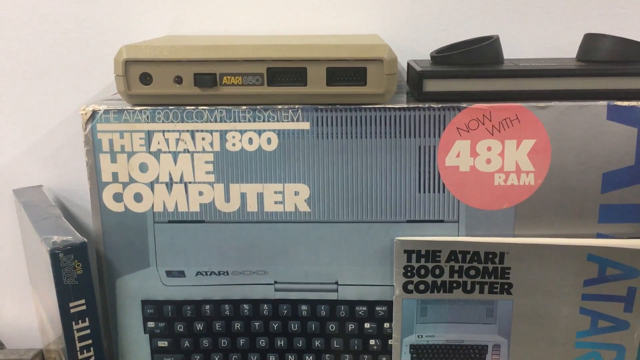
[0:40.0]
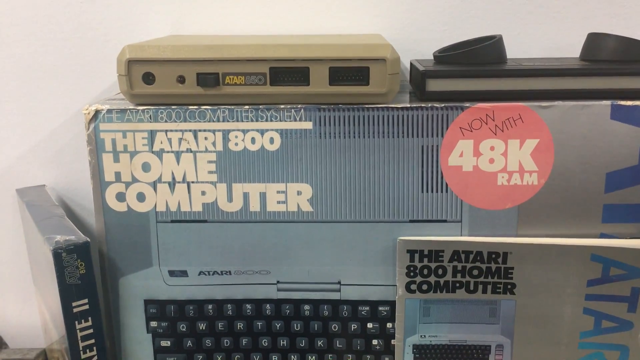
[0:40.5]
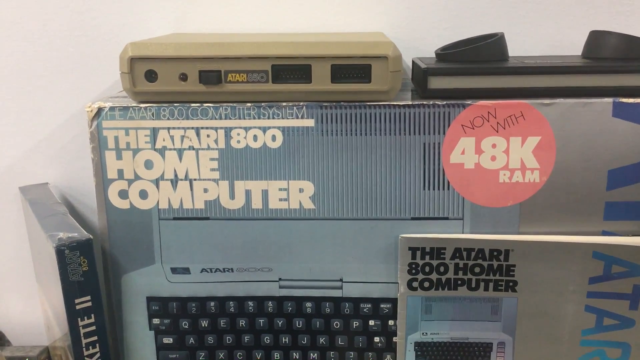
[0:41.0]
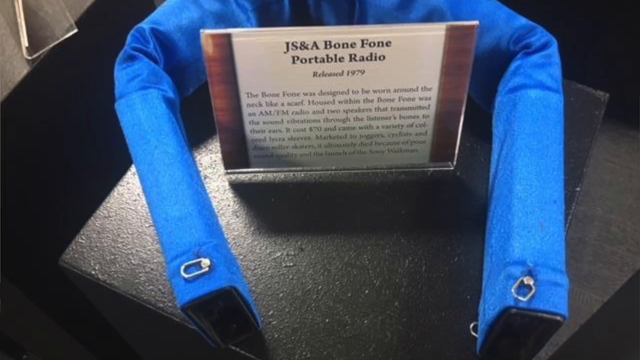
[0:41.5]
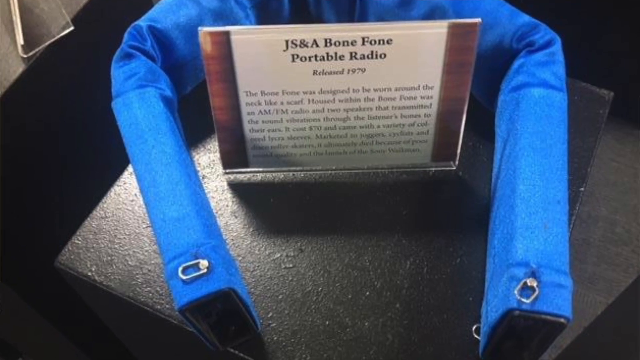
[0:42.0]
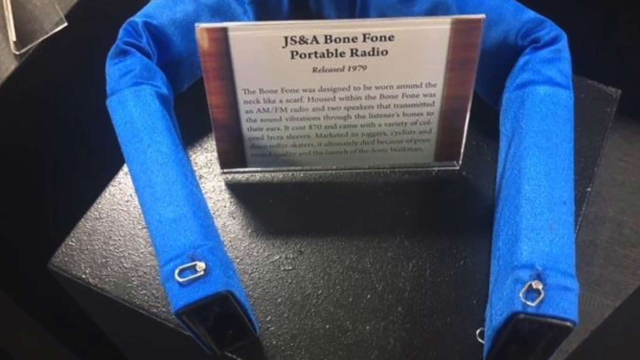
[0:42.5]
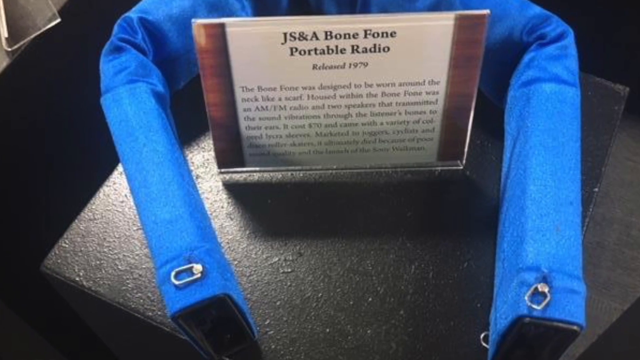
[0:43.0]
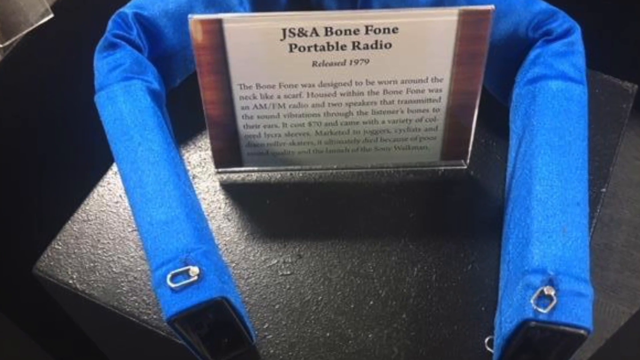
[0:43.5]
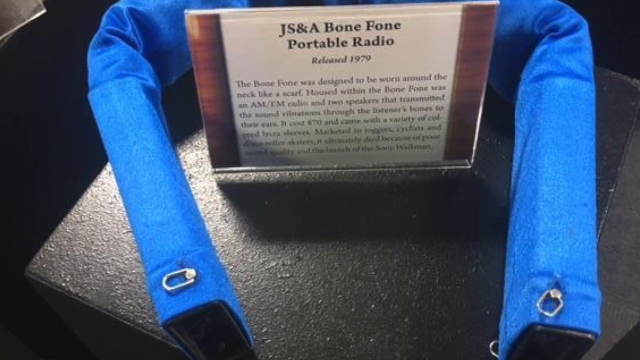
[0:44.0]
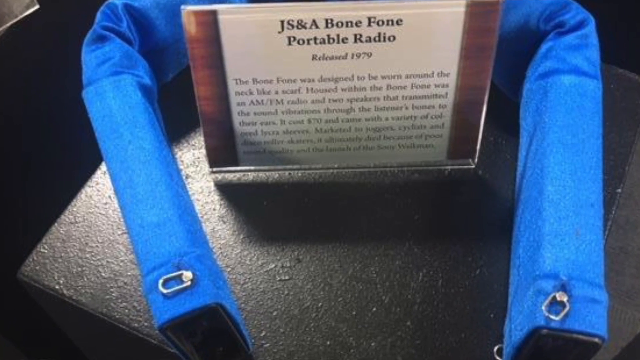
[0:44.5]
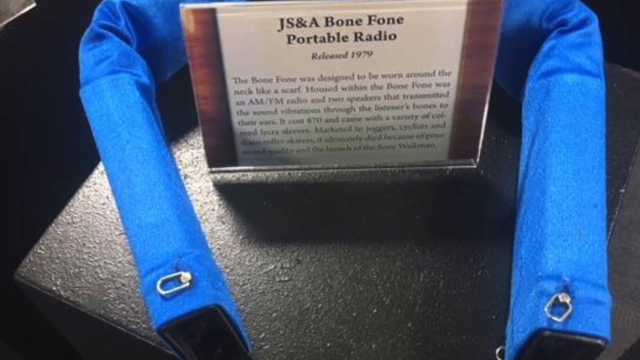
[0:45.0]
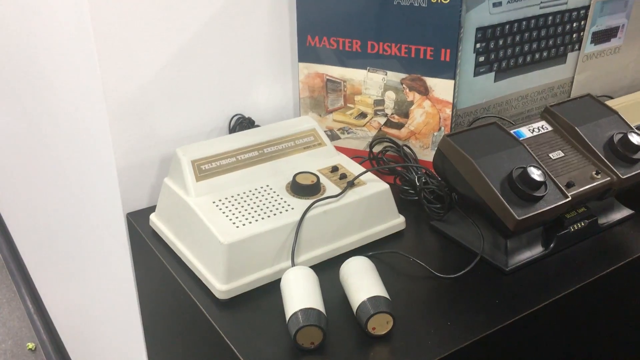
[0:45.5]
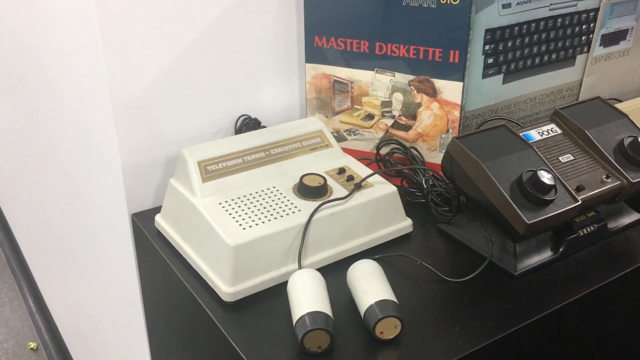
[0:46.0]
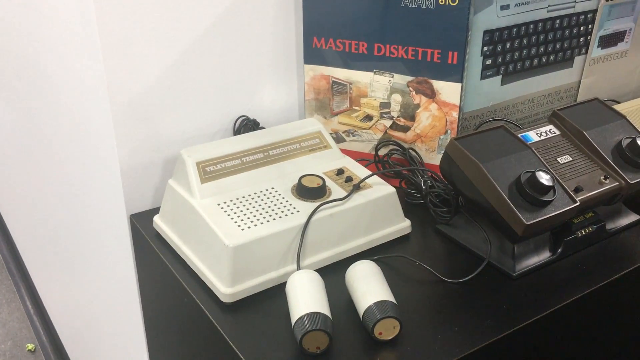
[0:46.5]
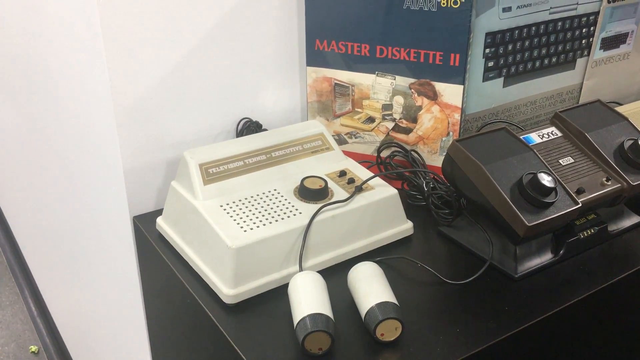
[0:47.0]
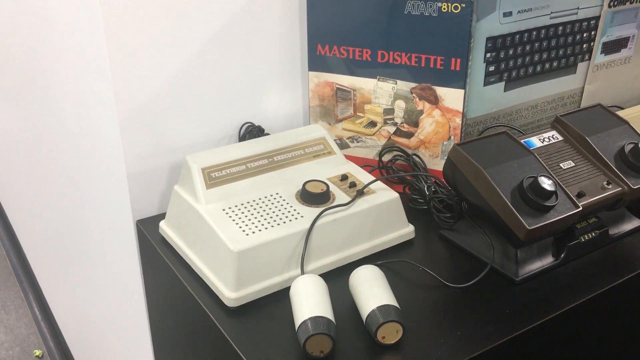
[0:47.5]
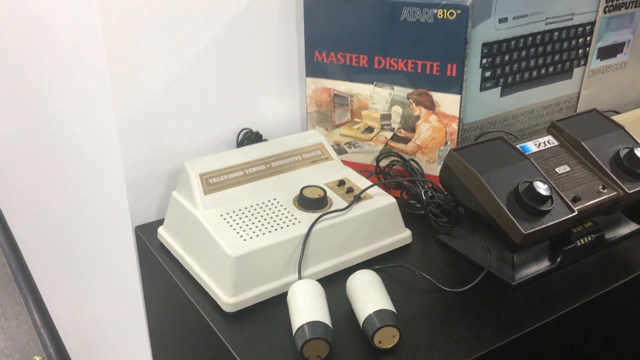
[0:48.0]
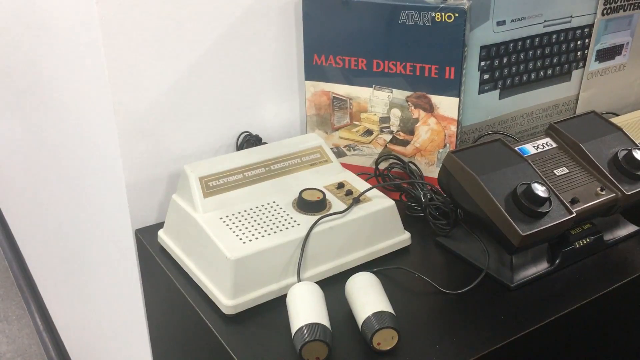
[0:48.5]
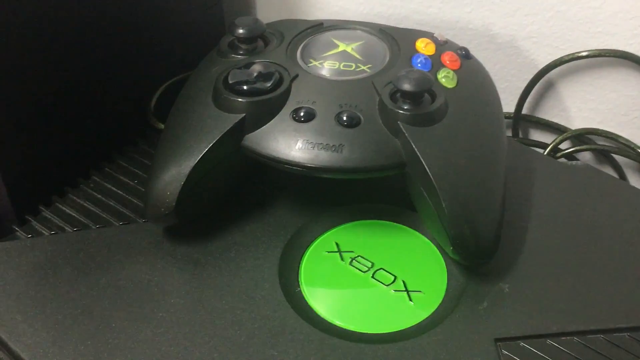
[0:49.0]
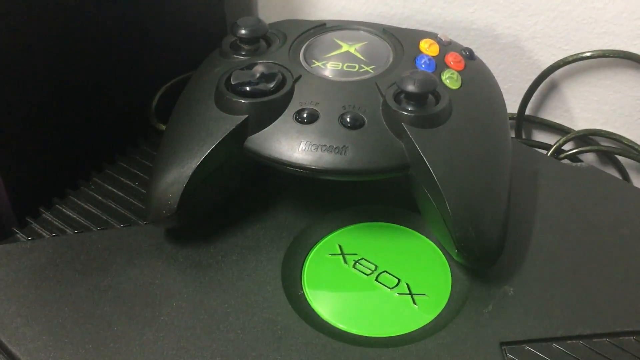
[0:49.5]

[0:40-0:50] Tags read "the Atari 800 home computer now with 48k ram," and the Atari 800 home computer is shown along with many other machines. There is a portable radio, a lot of machinery, and a remote controller. A device with a lot of ports seems to be a switch or a hub. There are more machines in the museum.